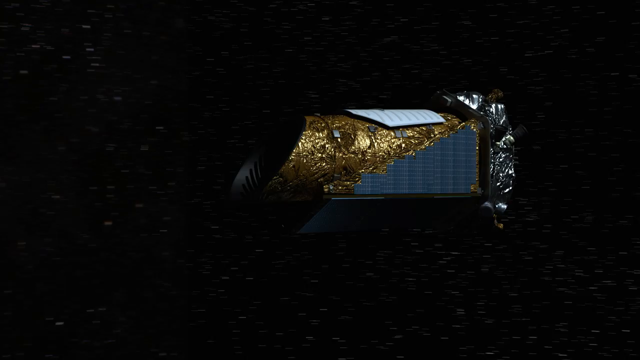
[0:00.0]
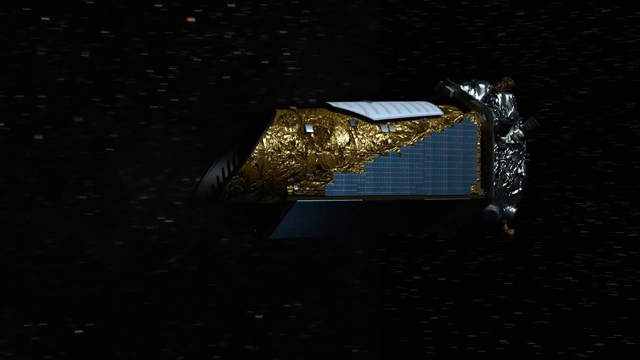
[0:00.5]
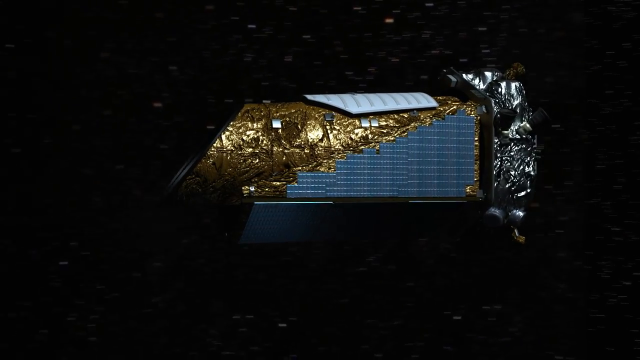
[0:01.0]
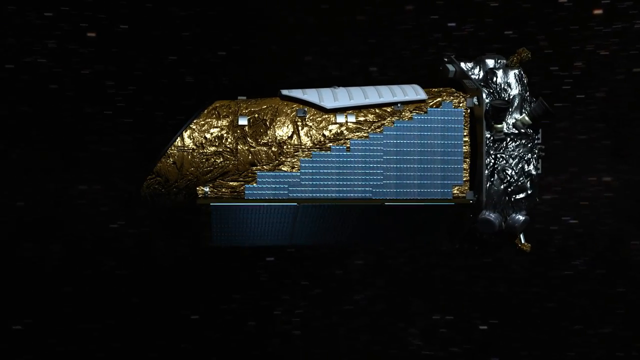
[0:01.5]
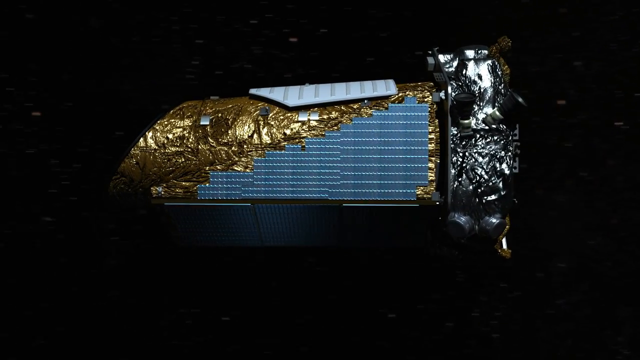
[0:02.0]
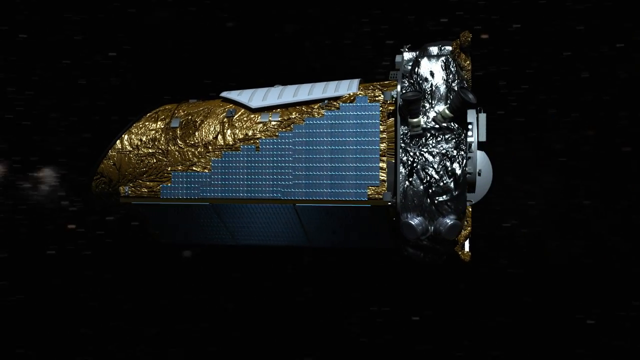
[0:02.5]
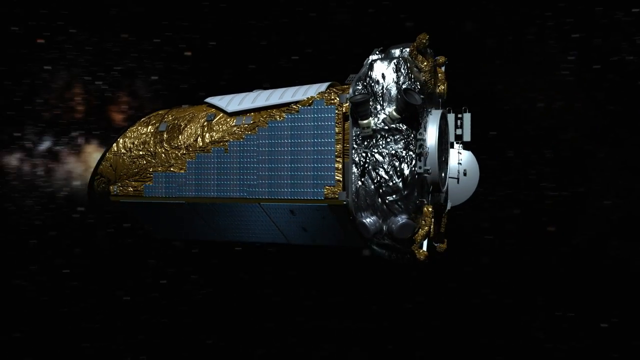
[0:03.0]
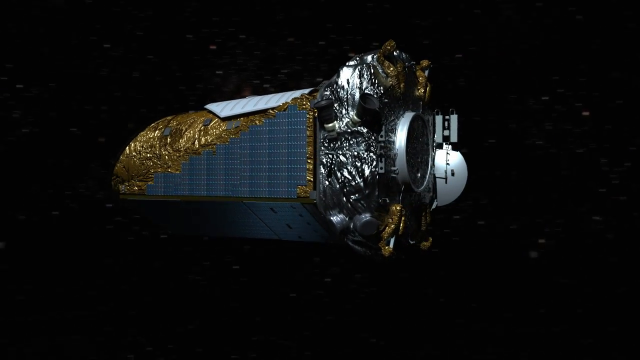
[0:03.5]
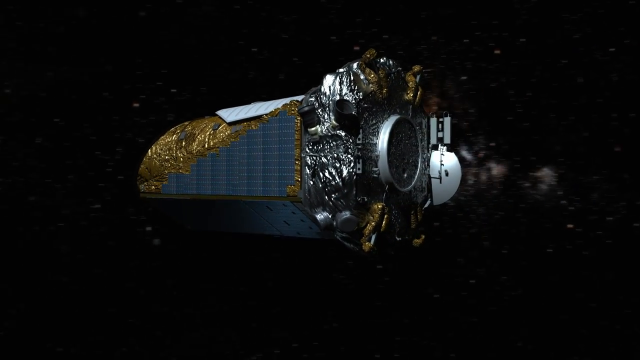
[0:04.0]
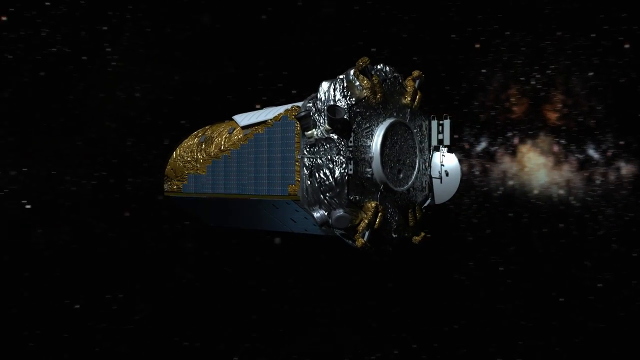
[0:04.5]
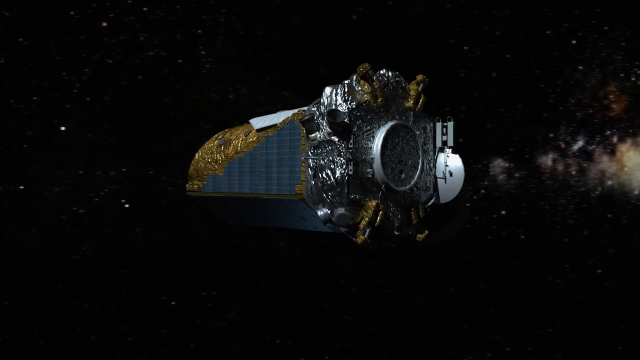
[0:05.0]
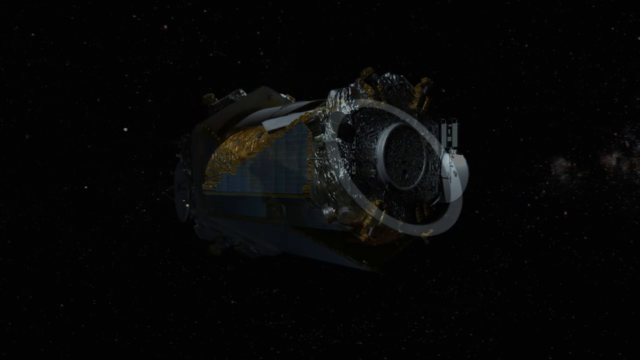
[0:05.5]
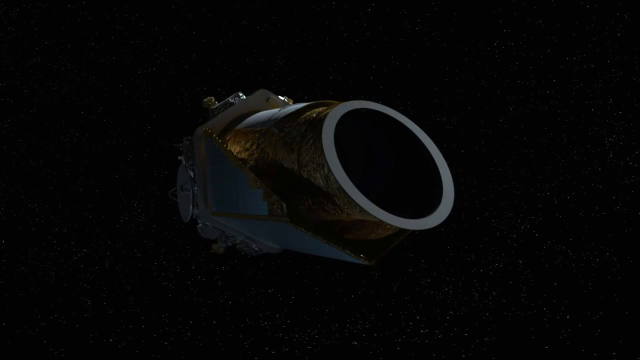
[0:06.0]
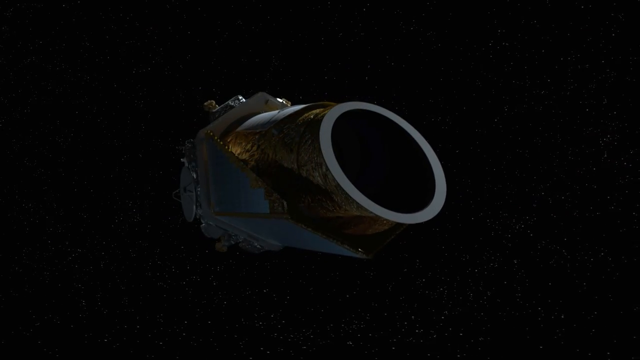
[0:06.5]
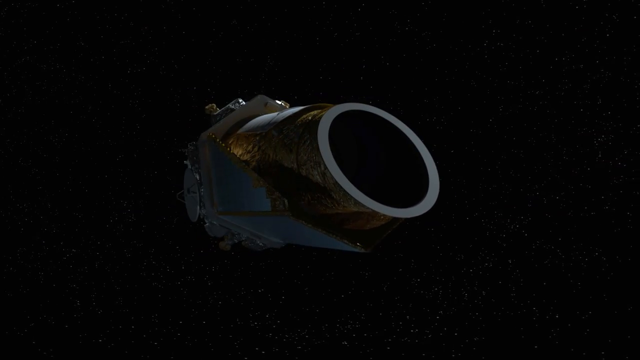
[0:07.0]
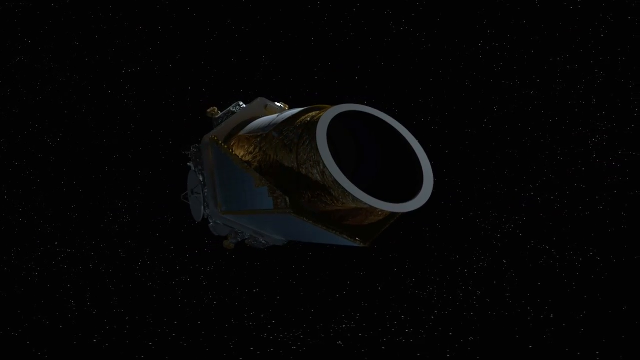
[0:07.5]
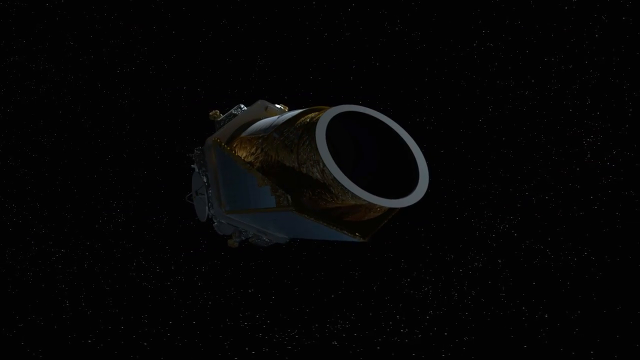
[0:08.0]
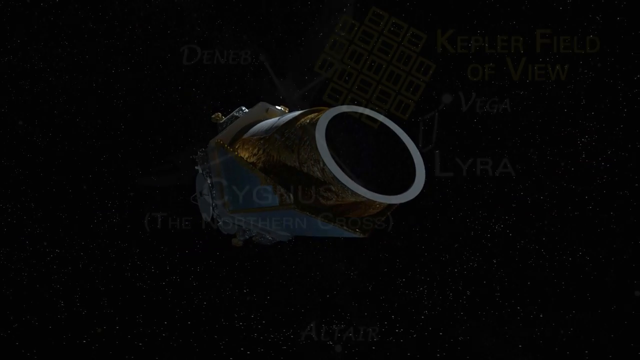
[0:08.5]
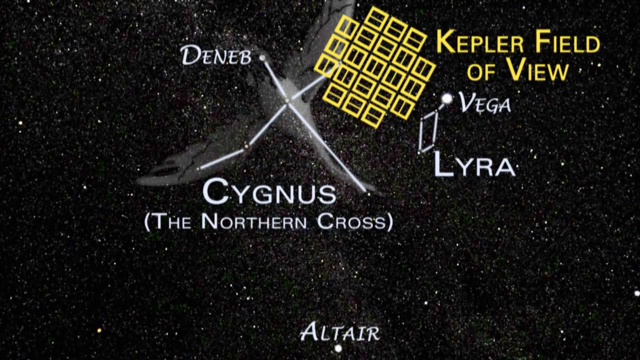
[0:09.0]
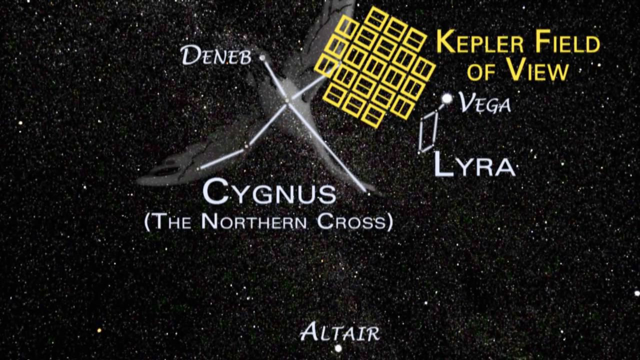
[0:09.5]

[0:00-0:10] A digital image shows a satellite hurtling through space against a black background with white stars. There appear to be solar panels attached to the side, which looks covered in some kind of metal like gold leaf, while the right or bottom of the ship looks very silvery. There appear to be more solar panels attached to the bottom. The satellite soars to the left, and a nebula is briefly visible in the back. There is apparently a circle on the bottom of the ship with lots of metal crusted around it. The top of the ship appears to have a black hole on it, with a silver rim like a cylinder. In the background are all kinds of white stars and a white, cloudy nebula, and the ship appears to float through space with lots of stars clustered behind it.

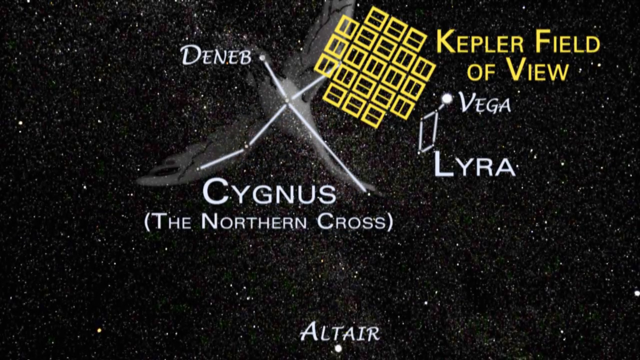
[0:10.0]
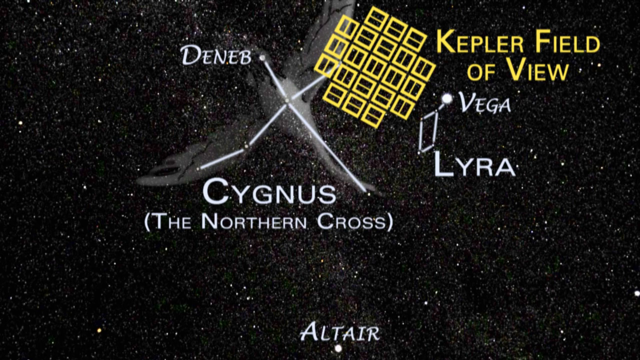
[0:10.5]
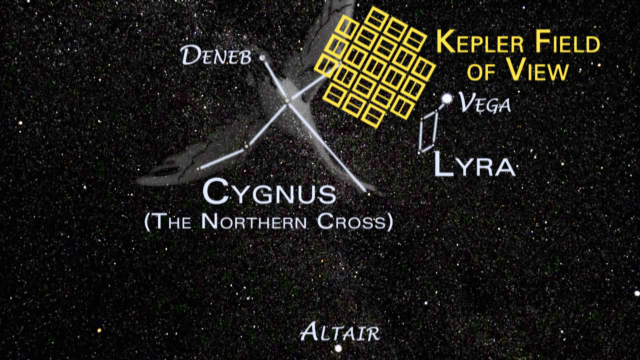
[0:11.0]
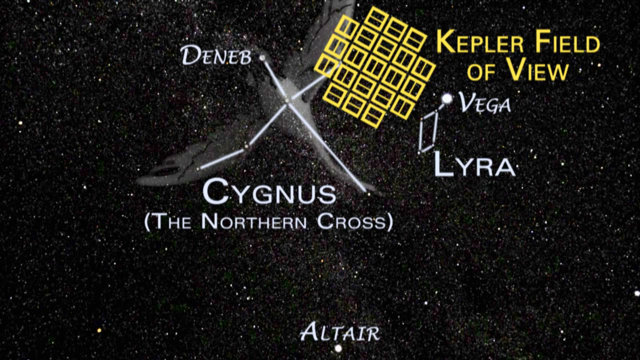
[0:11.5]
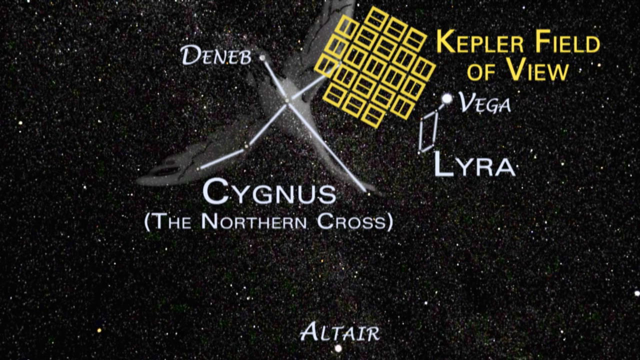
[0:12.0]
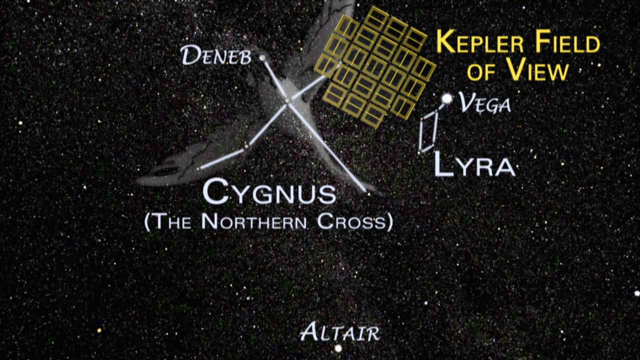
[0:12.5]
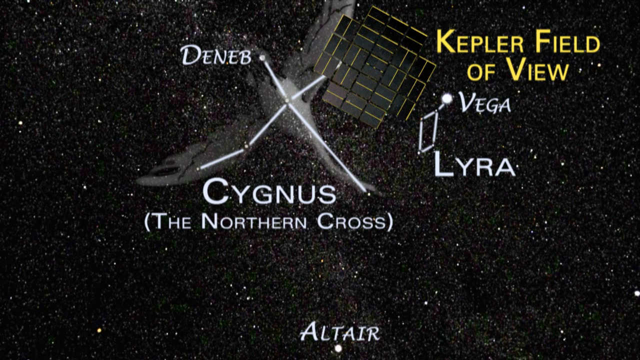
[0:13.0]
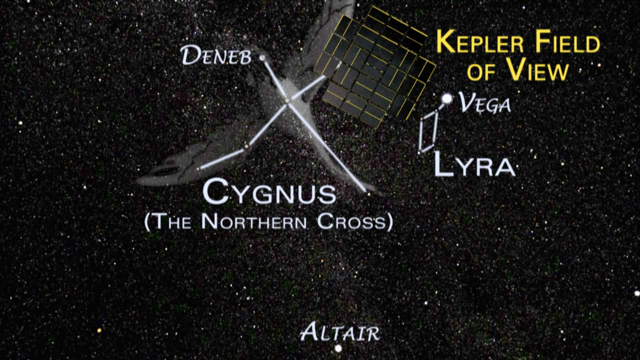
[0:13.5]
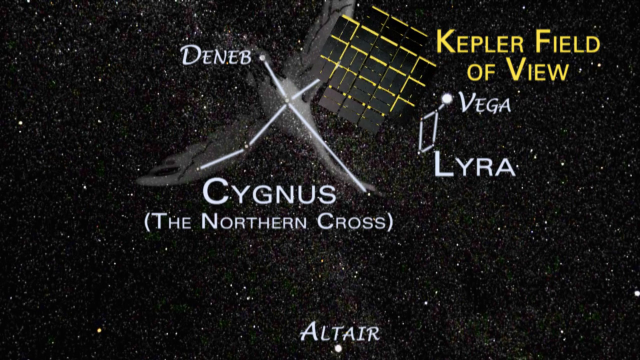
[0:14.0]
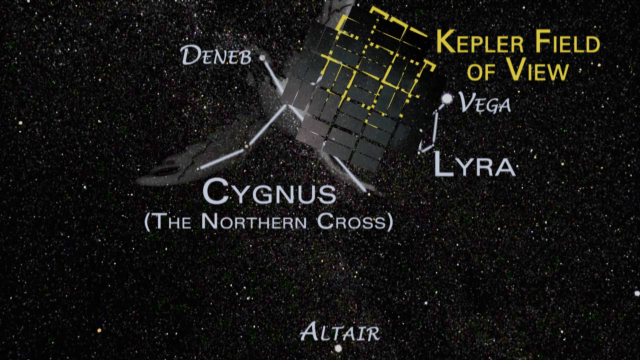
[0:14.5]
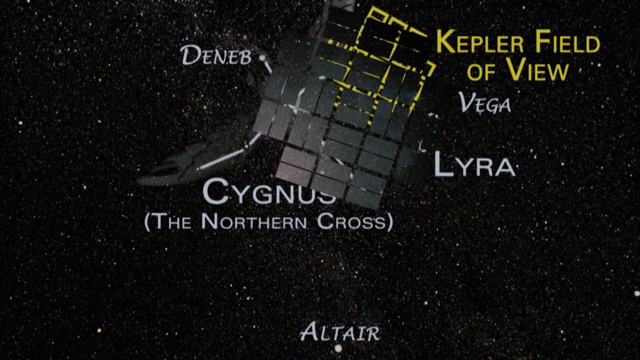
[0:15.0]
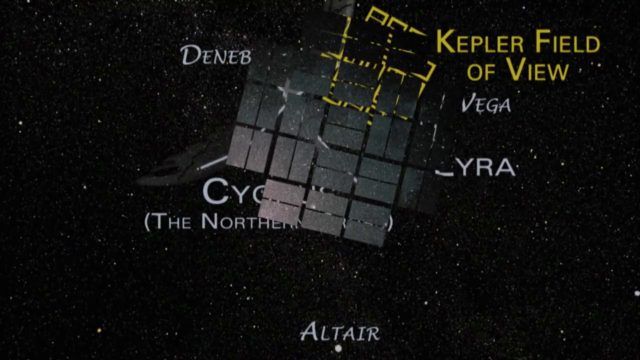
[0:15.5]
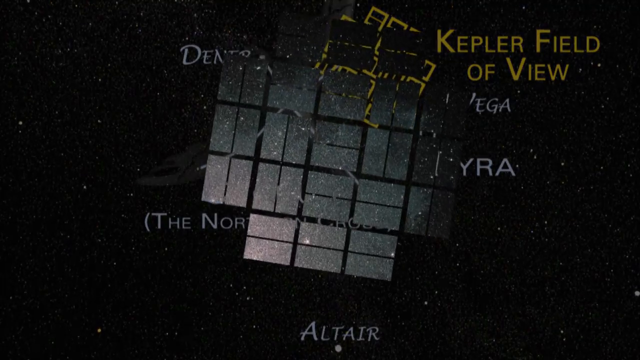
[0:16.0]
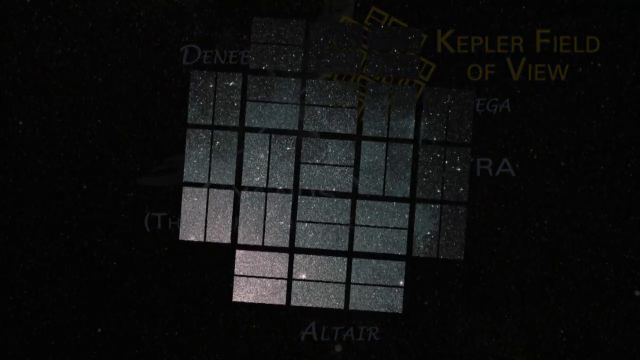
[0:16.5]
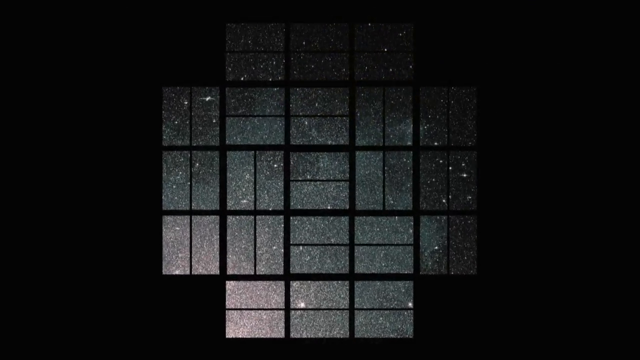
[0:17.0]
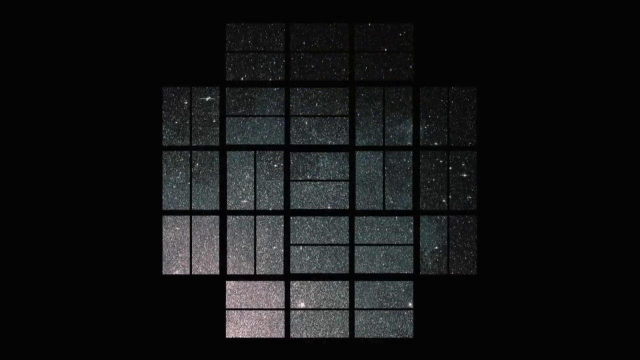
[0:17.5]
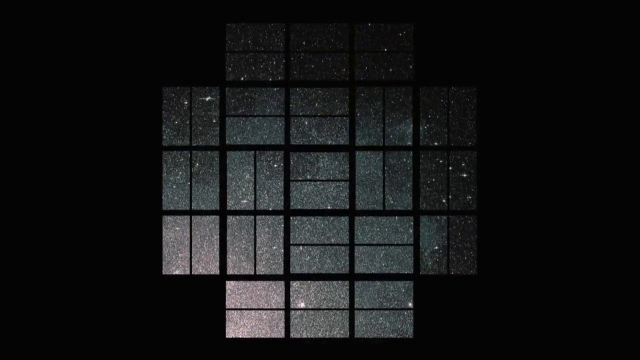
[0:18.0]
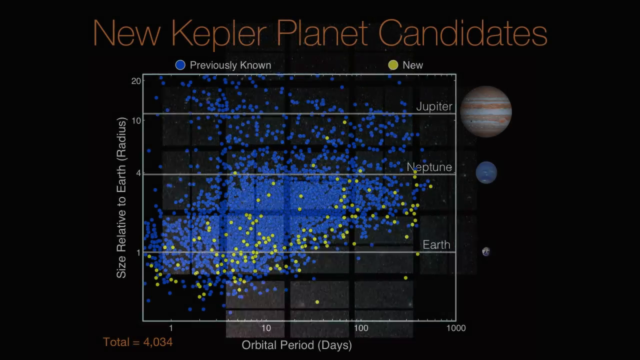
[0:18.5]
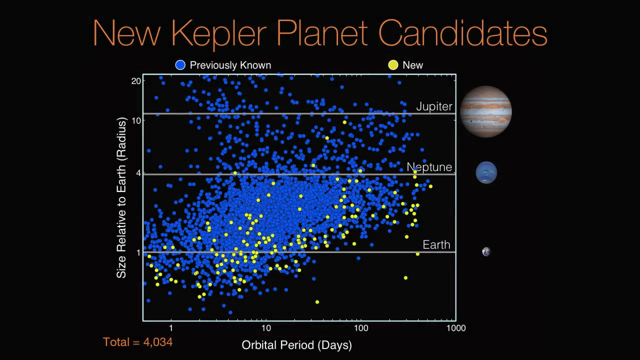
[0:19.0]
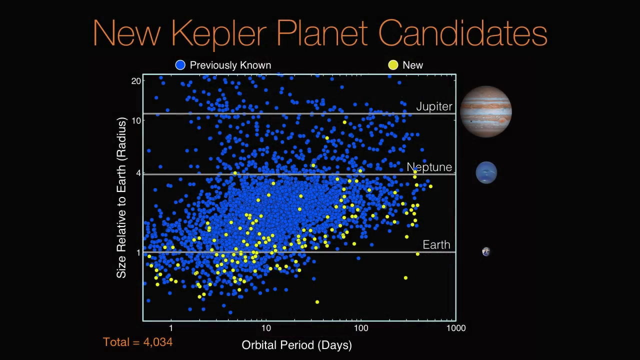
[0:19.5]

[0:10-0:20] A picture of space, possibly showing a constellation, has white lines connecting dots drawn on the screen, with the text "Cygnus, the Northern Cross." An image of a bird appears to be overlaid on it. On the right, yellow text reads "Kepler field of view," with a grid over a small section of stars. Another star is labeled "Vega," and a small square, rectangular constellation is called "Lyra." Another star at the bottom is labeled "Altair." The grid becomes bigger, turns gray and seems to fill the entire screen. Then a chart titled "New Kepler Planet Candidates" appears in red text against a black background, with some planets pictured on the right side of the screen and a dot graph in the middle.